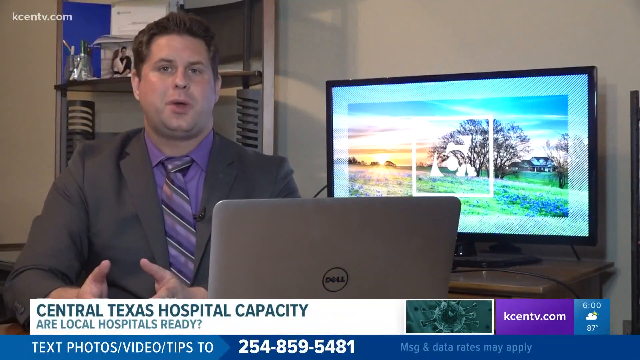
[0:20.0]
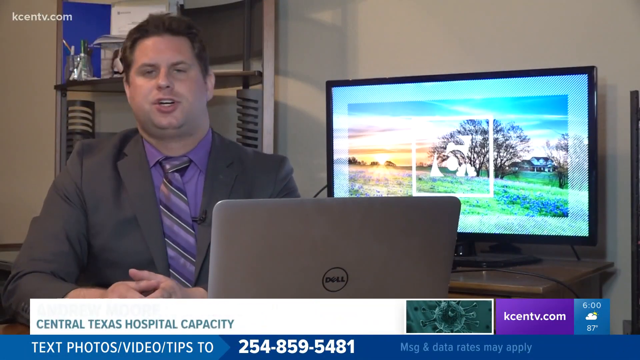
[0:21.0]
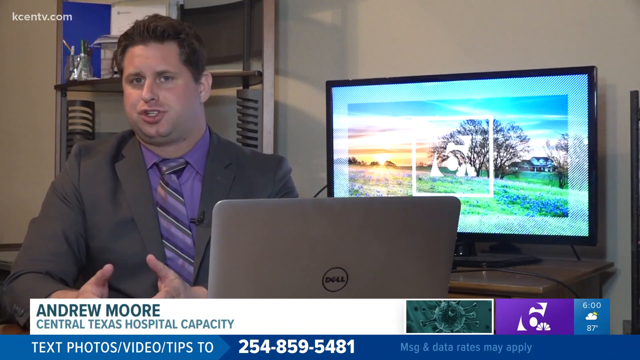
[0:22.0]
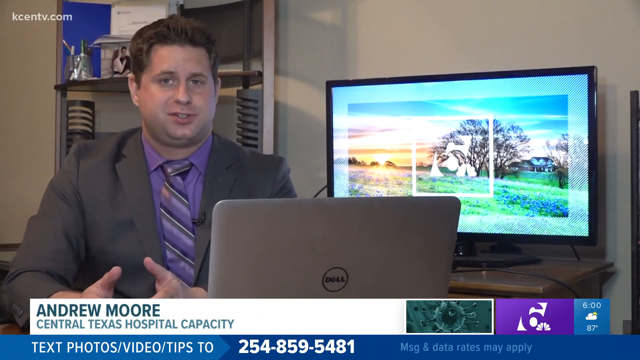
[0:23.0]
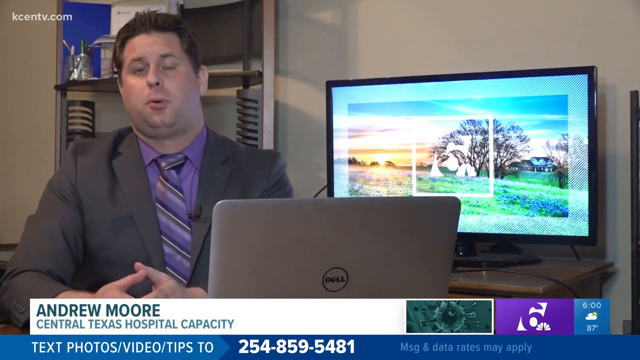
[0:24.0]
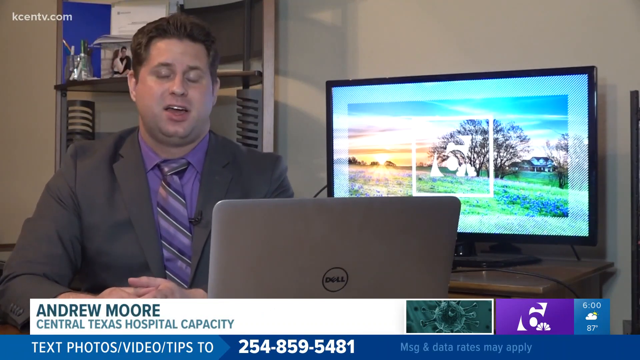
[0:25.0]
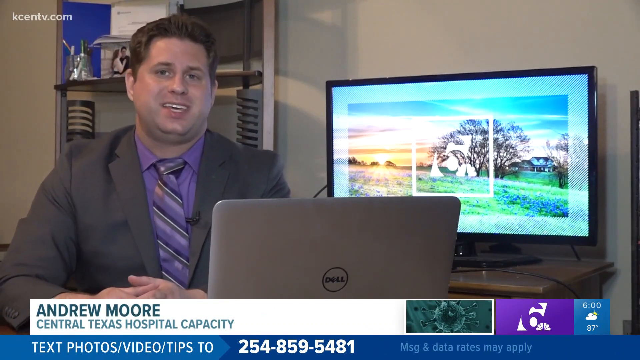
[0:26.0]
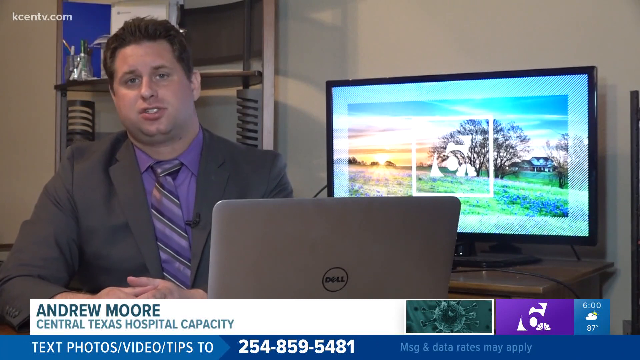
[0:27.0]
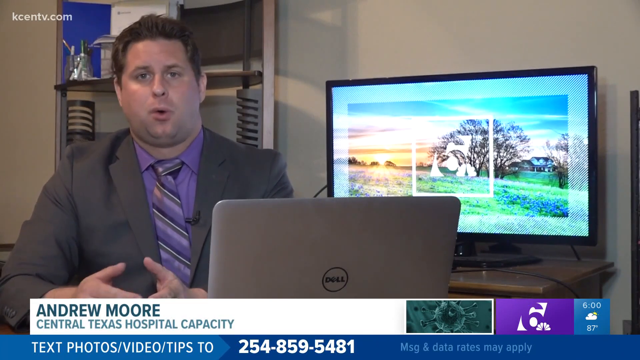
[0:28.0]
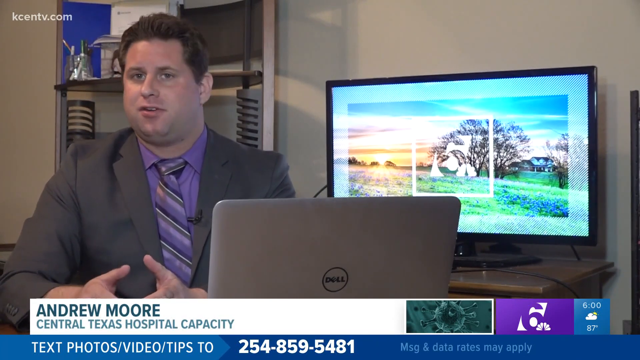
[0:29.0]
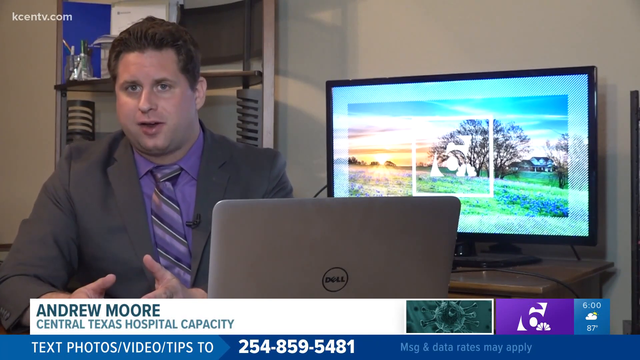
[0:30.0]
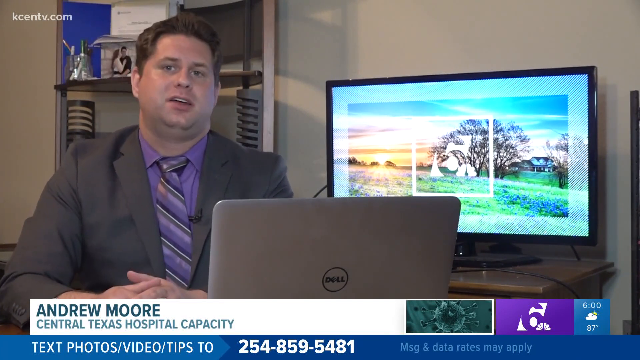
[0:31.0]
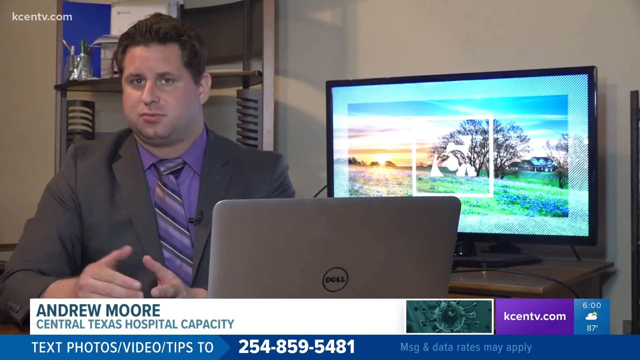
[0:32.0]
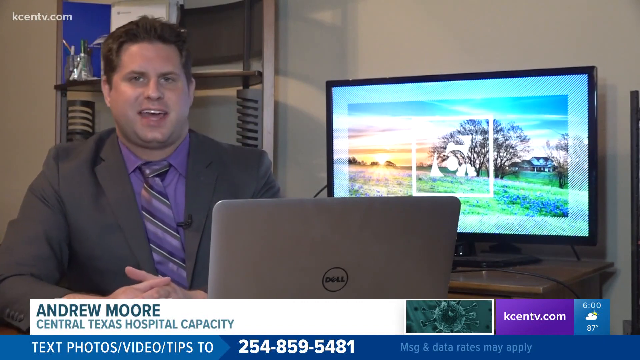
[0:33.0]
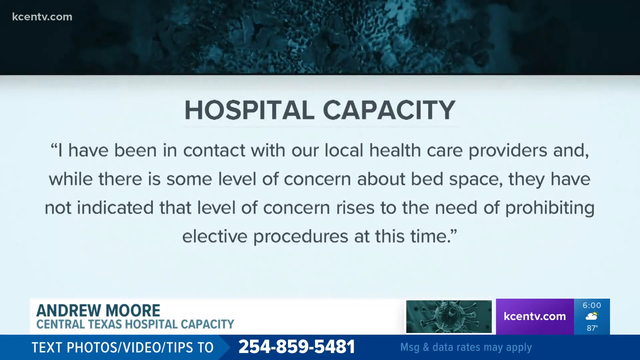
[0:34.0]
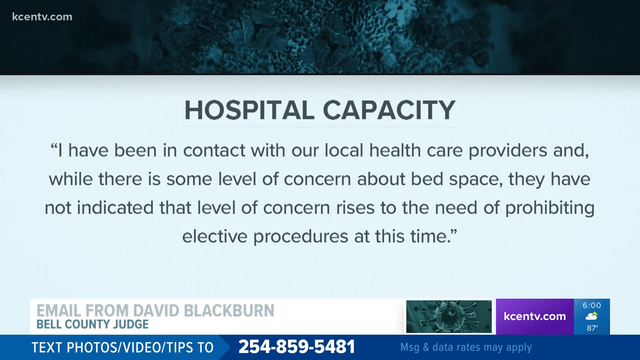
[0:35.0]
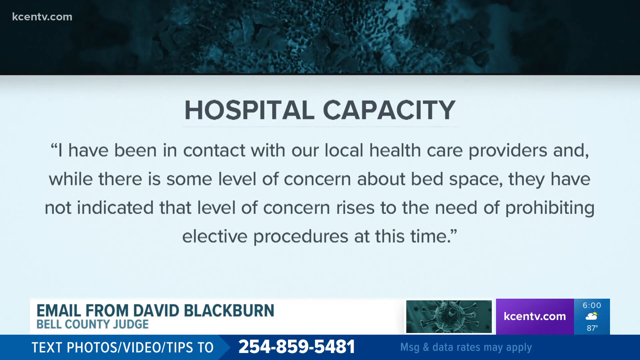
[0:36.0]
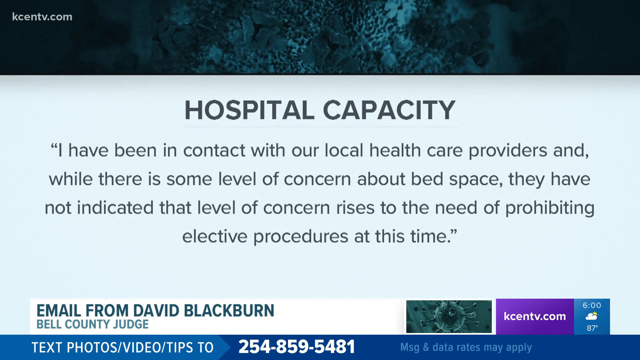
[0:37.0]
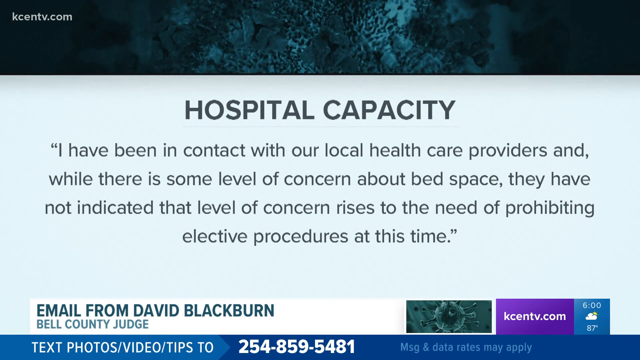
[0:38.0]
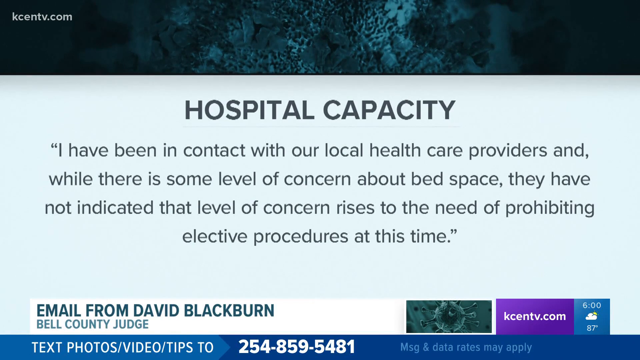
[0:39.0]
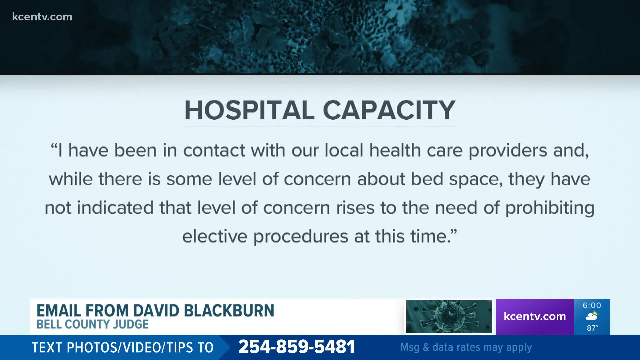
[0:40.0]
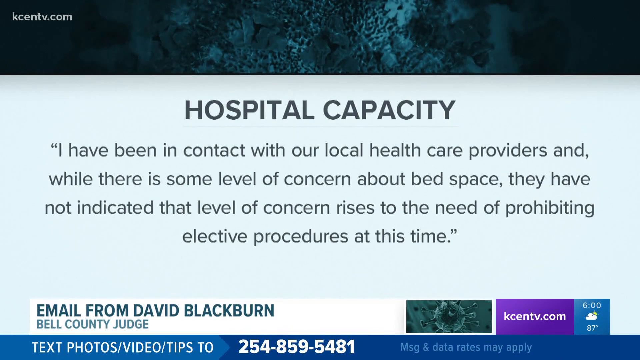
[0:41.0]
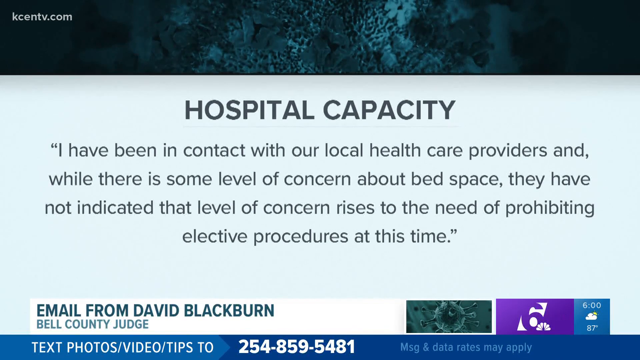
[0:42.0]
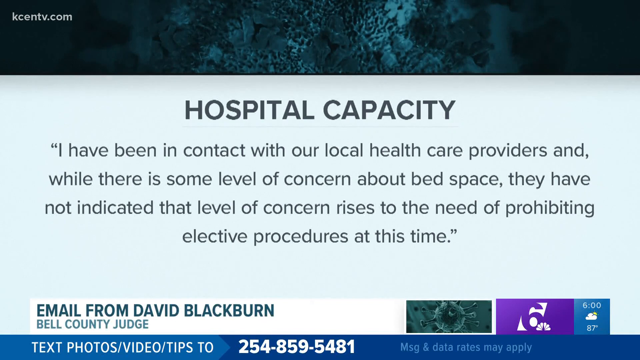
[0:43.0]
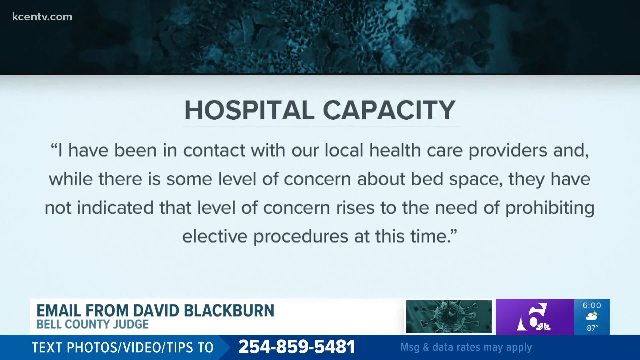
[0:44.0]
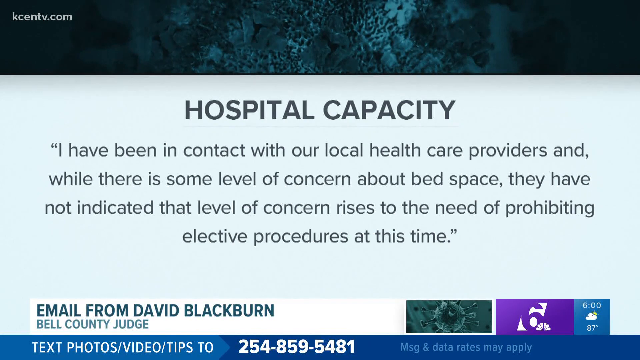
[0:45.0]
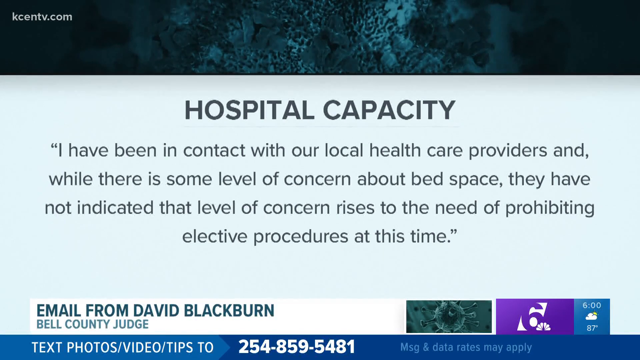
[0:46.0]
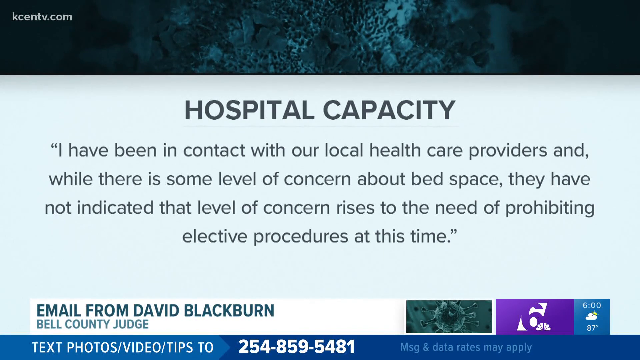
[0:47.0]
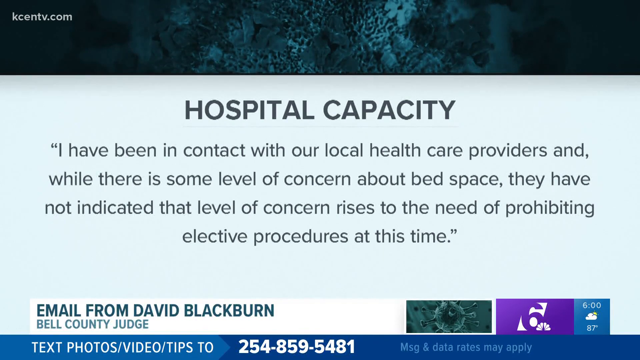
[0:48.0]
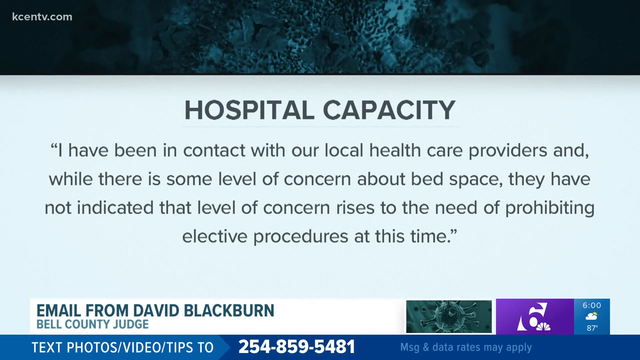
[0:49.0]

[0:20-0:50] The man in the room appears to be Andrew Moore, whose name shows at the bottom of the screen, with the headline "Central Texas hospital capacity" still at the bottom. He looks to be maybe in his 30s, with dark brown hair, and wears a gray suit, a purple shirt and a purple, gray and black striped tie. He sits in front of a Dell laptop, and there is a television, maybe around 30 inches, on something like a nightstand. The TV seems to show a screensaver: an illustration of a sunset, some trees and some water. Behind him is a noticeable bookcase with what may be a picture, possibly of him and his wife, something like a pencil case next to it, and what look like slots for CDs and DVDs. The bottom of the screen gives the number 254-859-5481 to call or text. After he talks for a few moments, a message pops up with a quote: "I've been in contact with our local healthcare providers and while there's some level of concern about bed space, they have not indicated that level of concern arises to the need of prohibiting elective procedures at this time." Information at the bottom of the screen identifies it as an email from David Blackburn, the Bell County judge. The text is in all black lettering on a very light blue background.